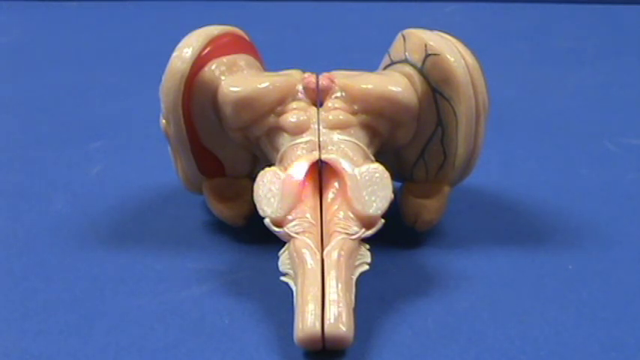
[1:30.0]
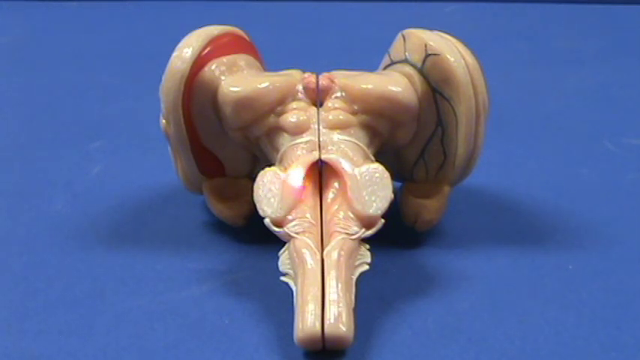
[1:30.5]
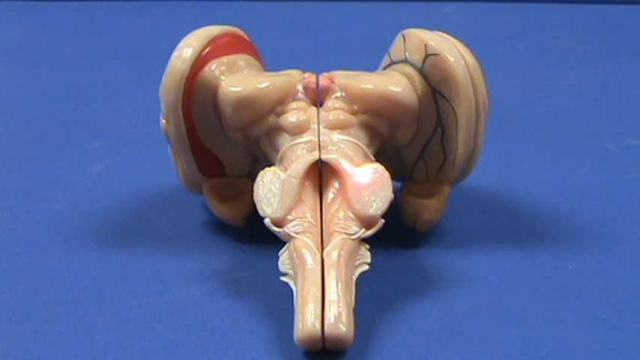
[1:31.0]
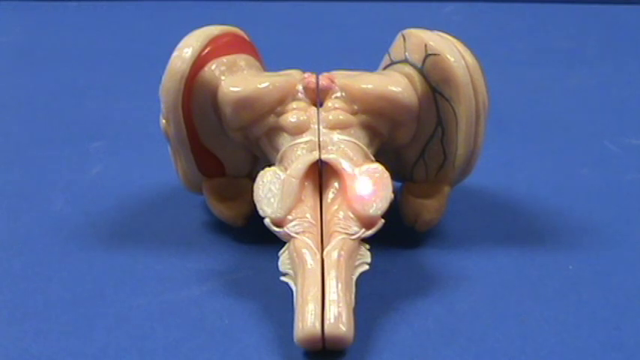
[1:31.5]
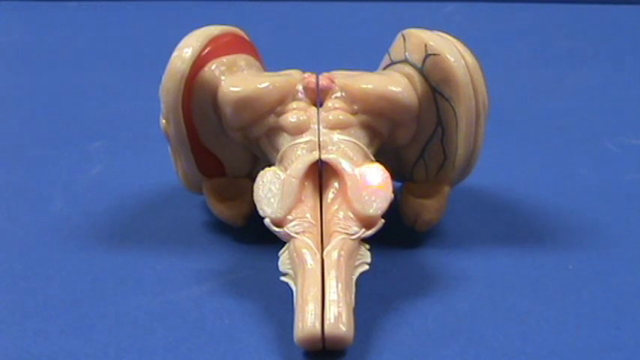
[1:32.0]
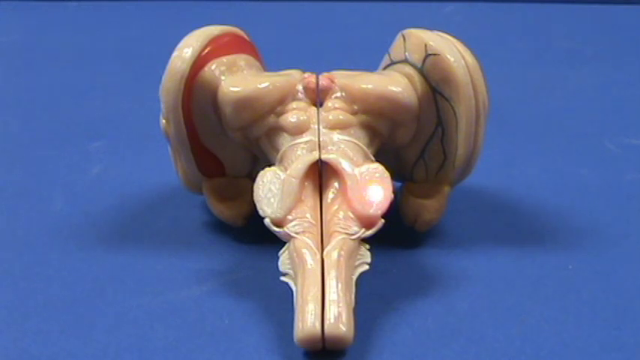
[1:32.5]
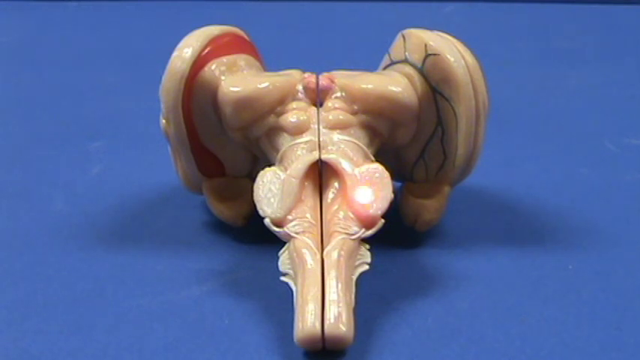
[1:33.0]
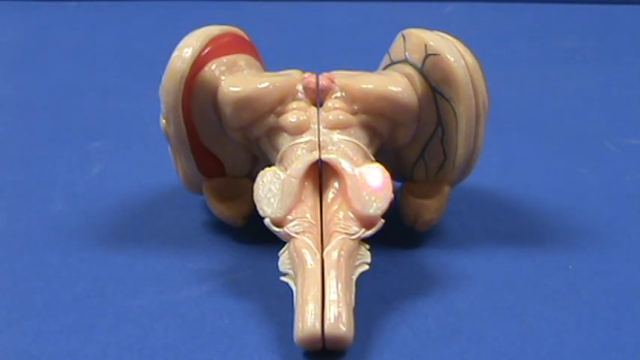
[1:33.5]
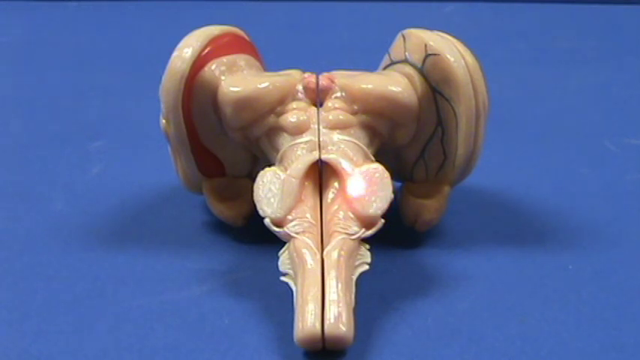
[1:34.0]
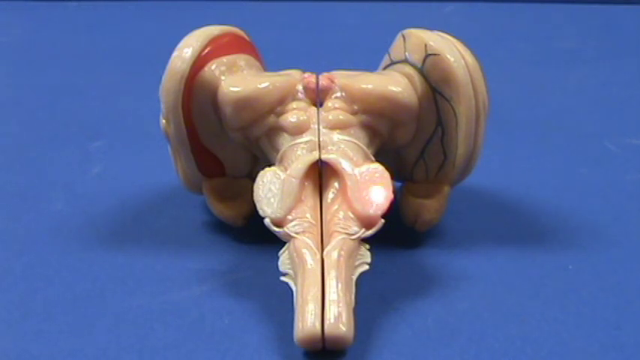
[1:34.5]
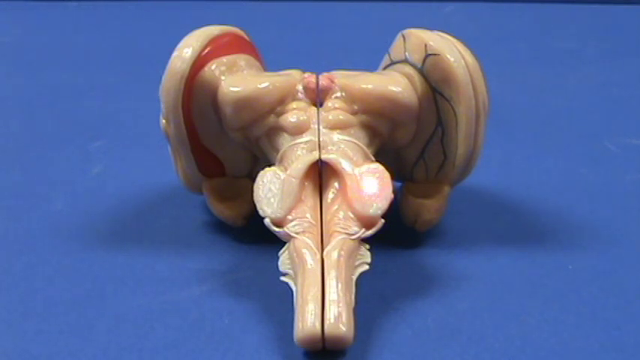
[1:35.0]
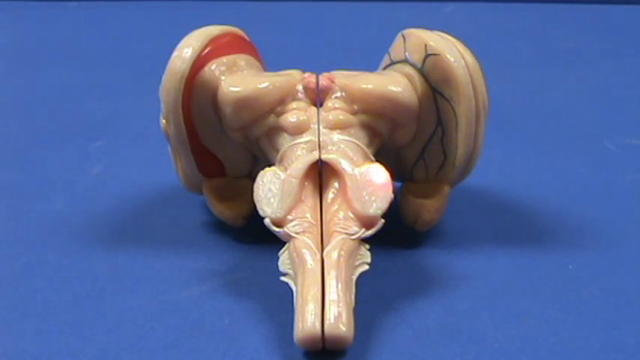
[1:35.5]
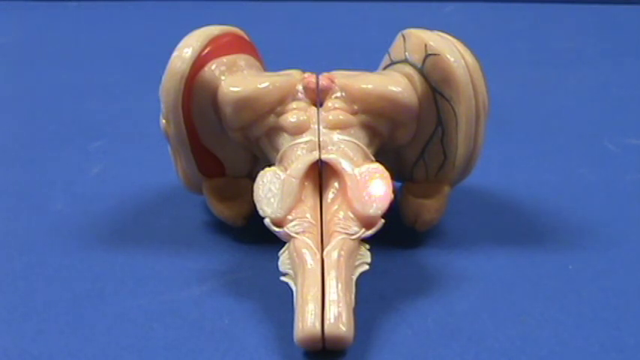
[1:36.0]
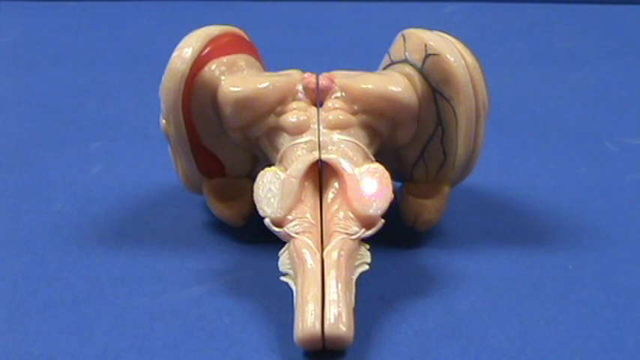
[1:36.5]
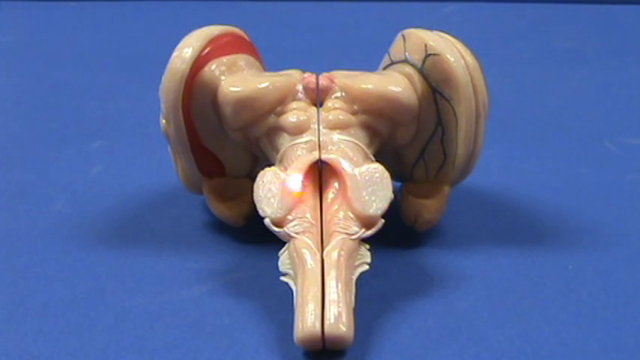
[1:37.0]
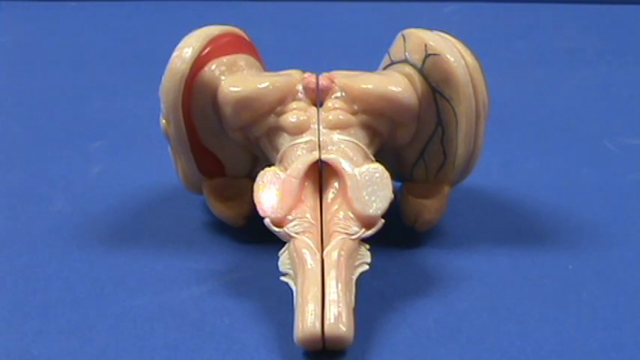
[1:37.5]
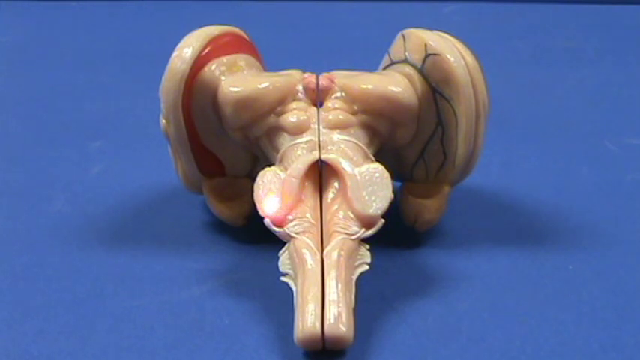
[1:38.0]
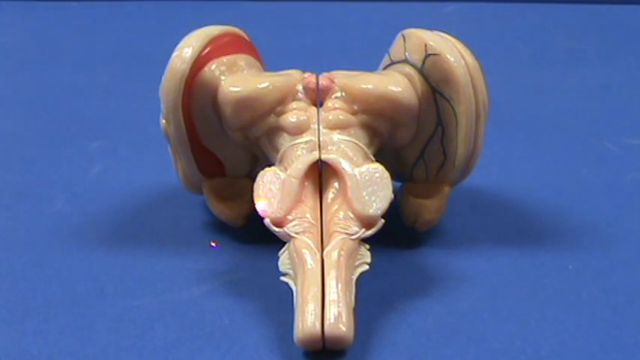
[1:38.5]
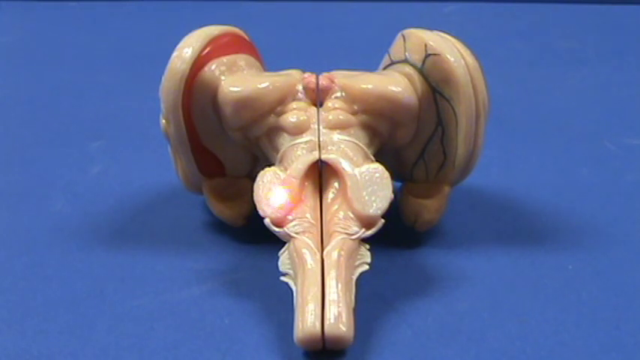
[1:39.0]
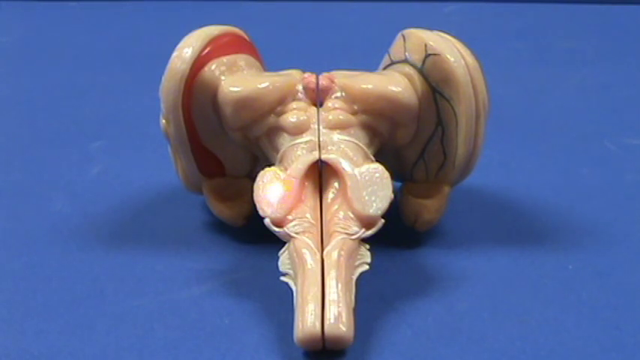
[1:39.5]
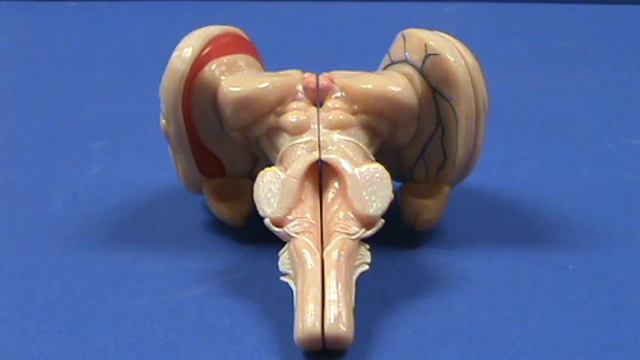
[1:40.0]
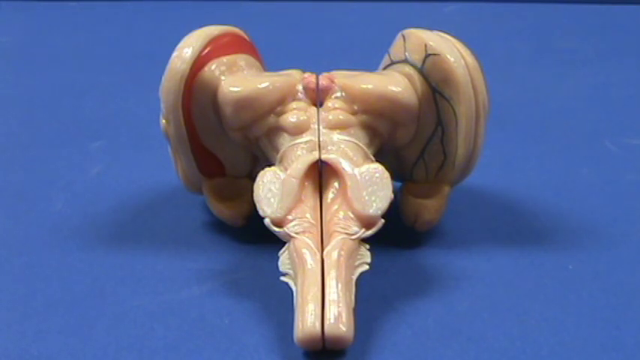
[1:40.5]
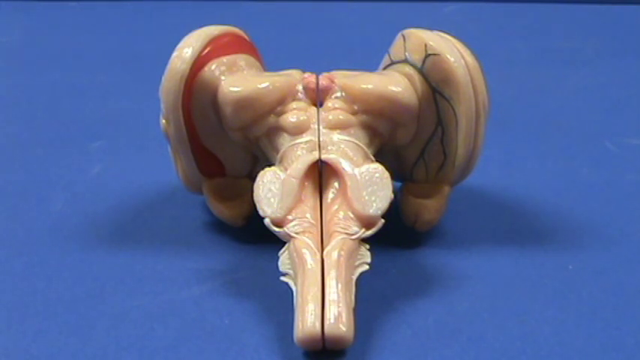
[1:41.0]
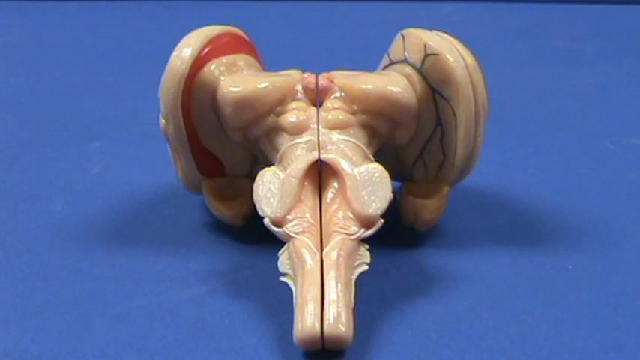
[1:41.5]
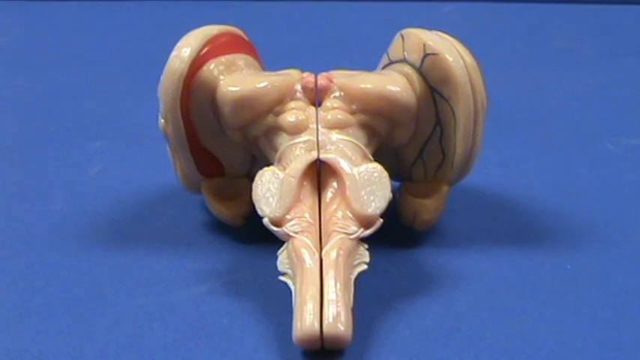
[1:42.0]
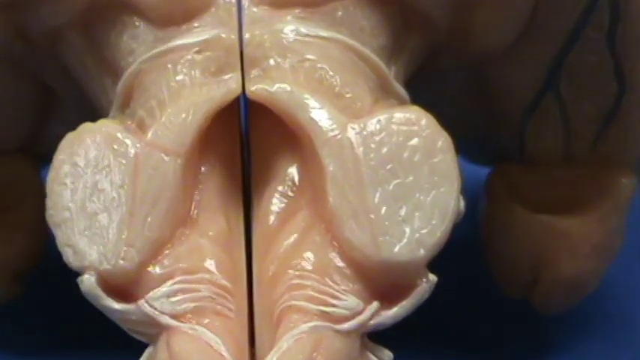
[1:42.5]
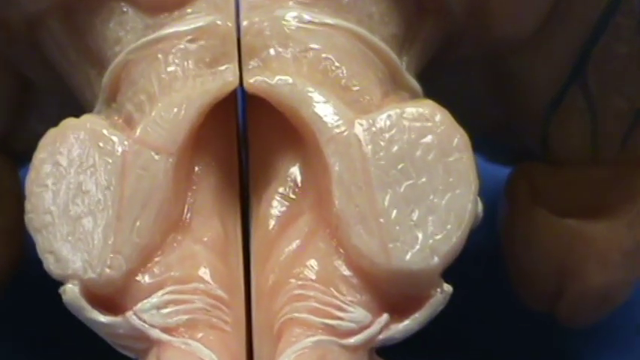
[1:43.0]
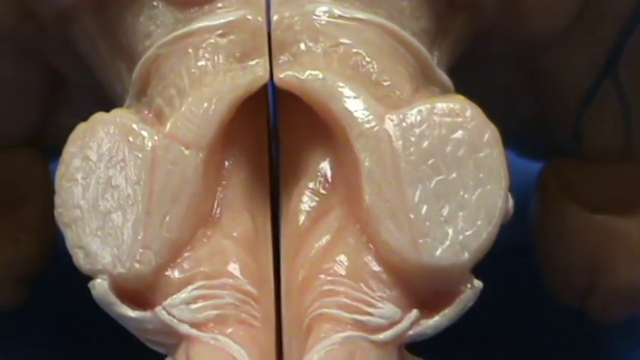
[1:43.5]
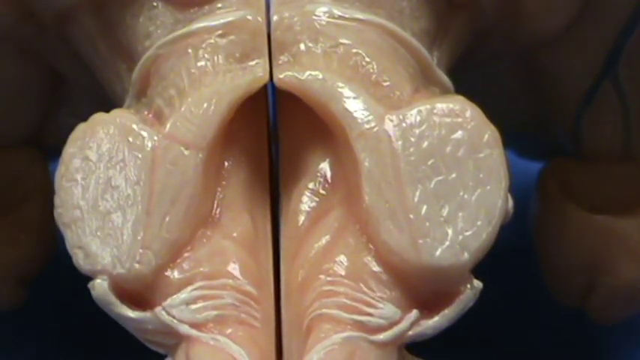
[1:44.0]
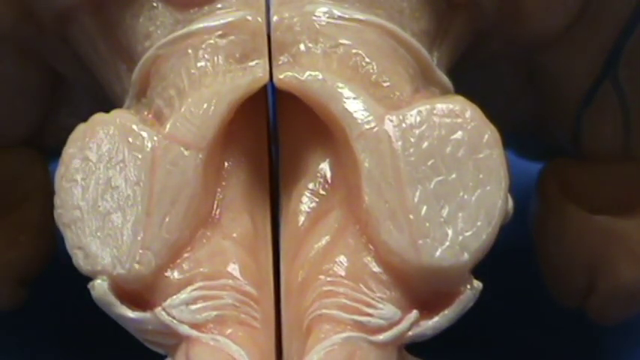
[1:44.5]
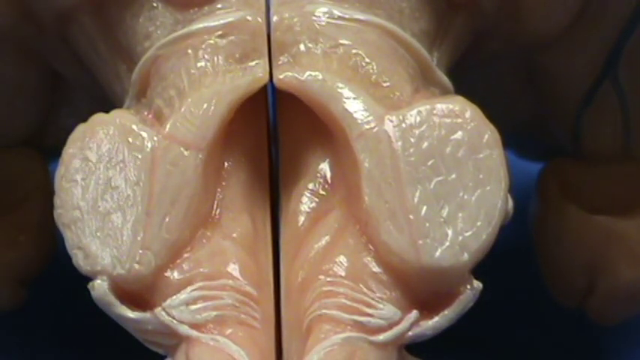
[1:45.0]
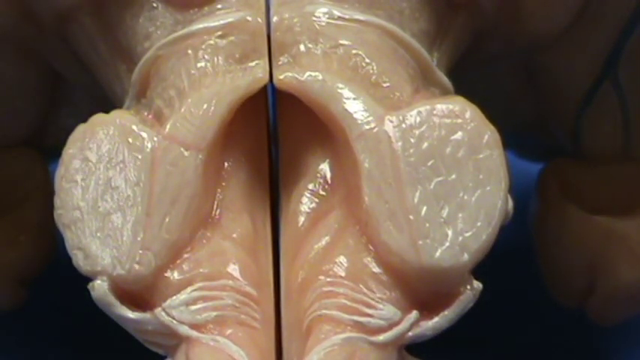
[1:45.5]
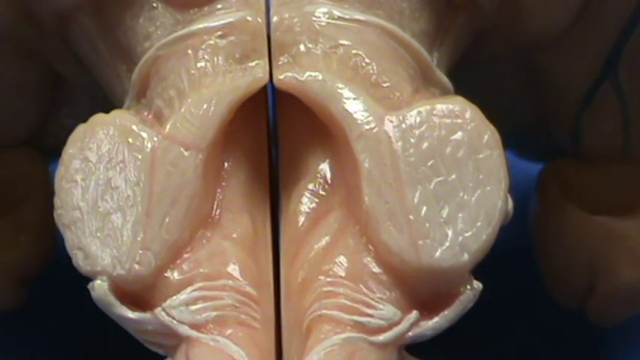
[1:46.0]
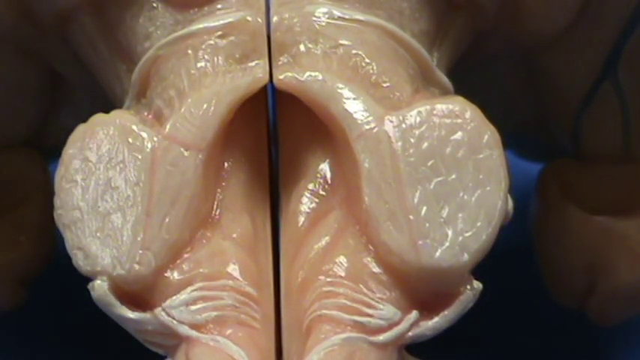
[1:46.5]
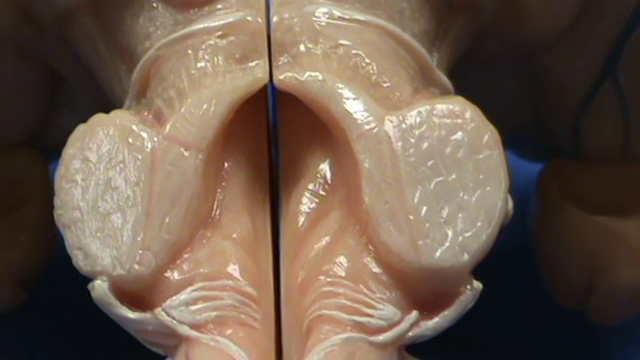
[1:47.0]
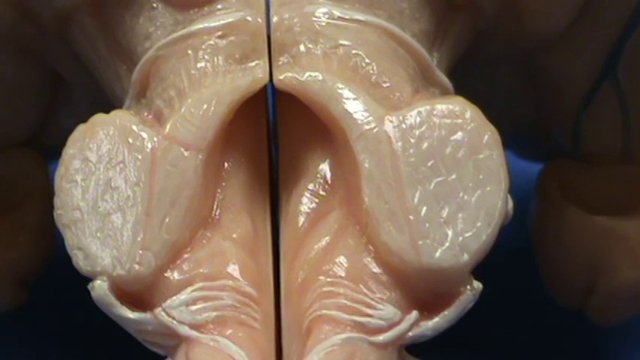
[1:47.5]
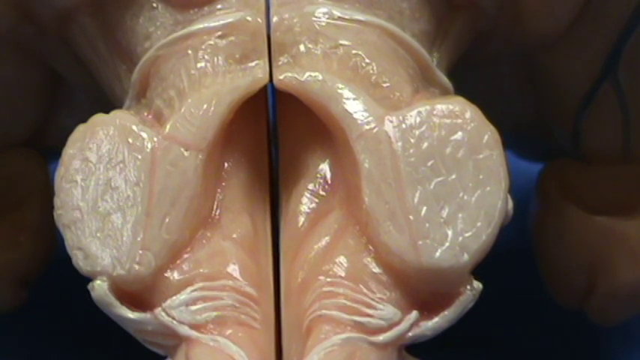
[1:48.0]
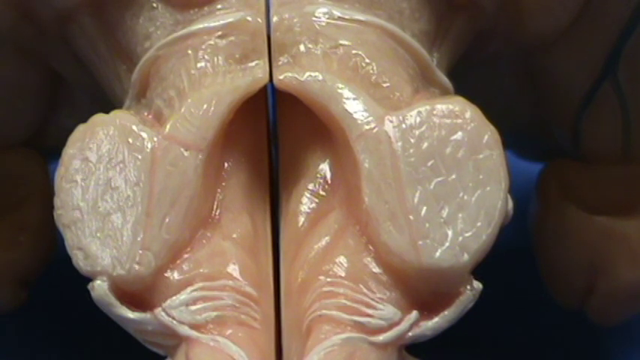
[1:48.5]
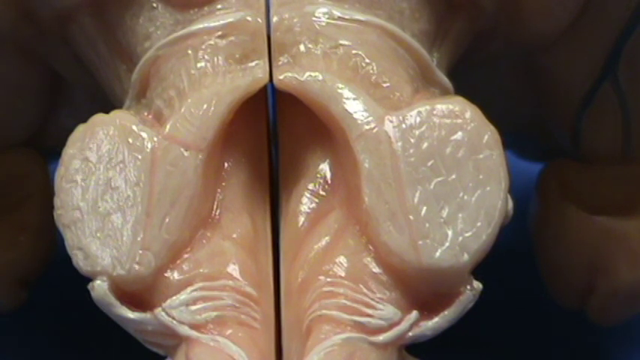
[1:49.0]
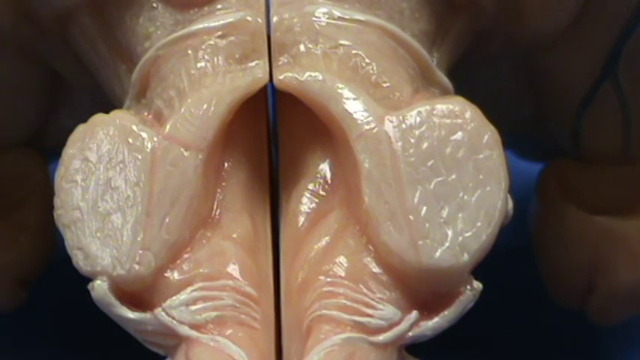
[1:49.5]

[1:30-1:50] While the laser circles the two disc-like parts of the model, the light goes out and the view cuts to an extreme close-up of these two small parts. They are flesh-toned and wrinkly, with smoother flesh-colored surfaces around them. They ridge up around an opening that strikingly resembles female genitalia. The two disks are connected by a ridge that runs up and down to each of them, and there is a hollow opening that looks like a vagina, going up into and underneath the ridge that holds up the two disks. In the close-up, the laser light comes on again at the edge of the disc on the right side of the model and begins to indicate something on that ridge.